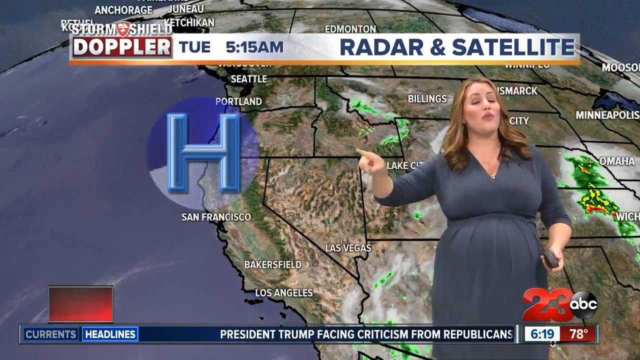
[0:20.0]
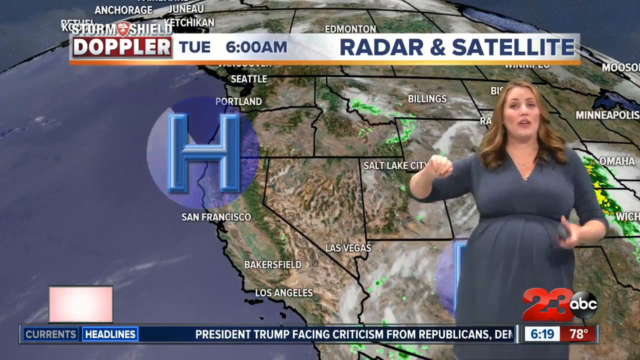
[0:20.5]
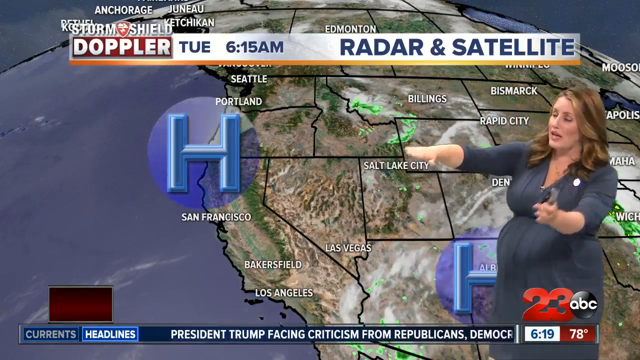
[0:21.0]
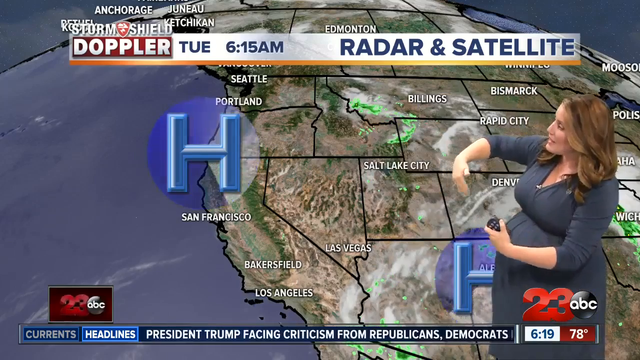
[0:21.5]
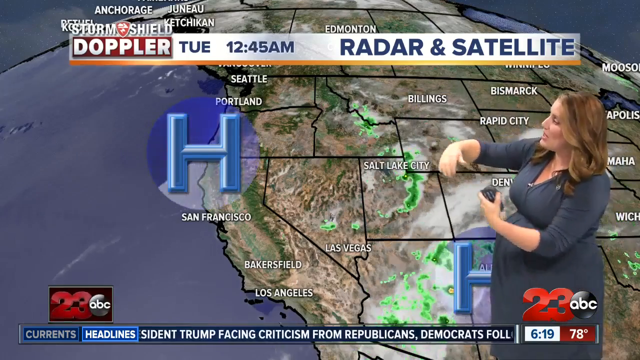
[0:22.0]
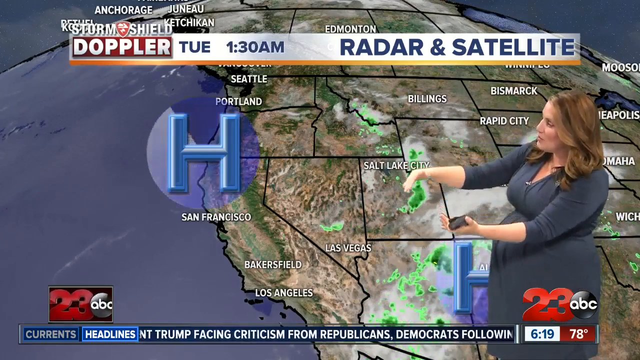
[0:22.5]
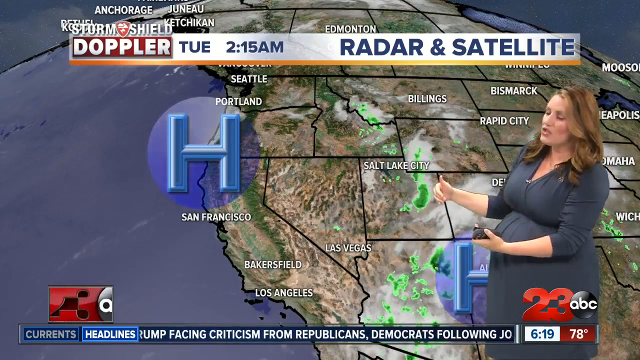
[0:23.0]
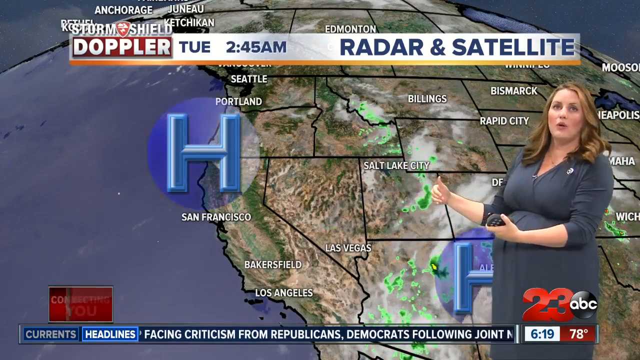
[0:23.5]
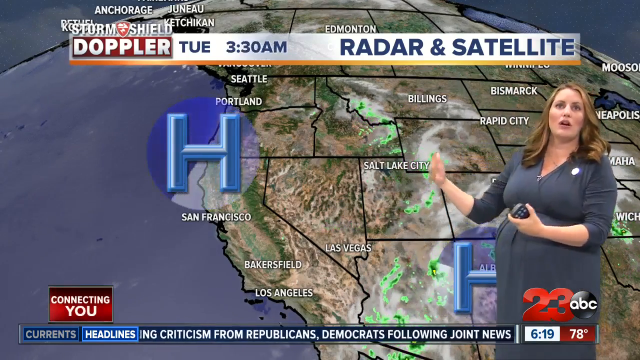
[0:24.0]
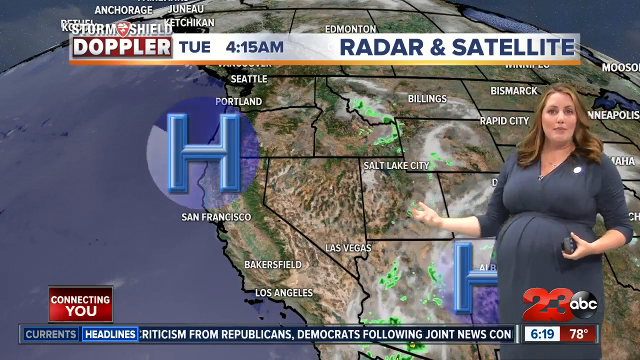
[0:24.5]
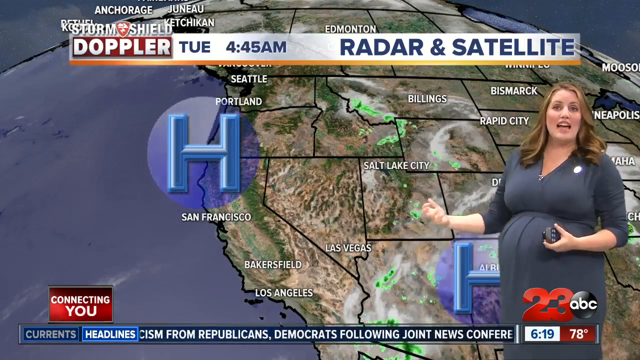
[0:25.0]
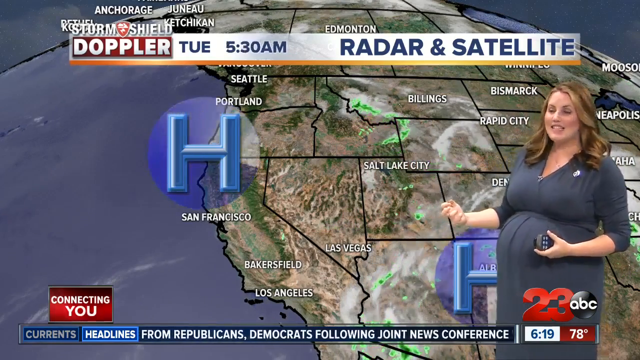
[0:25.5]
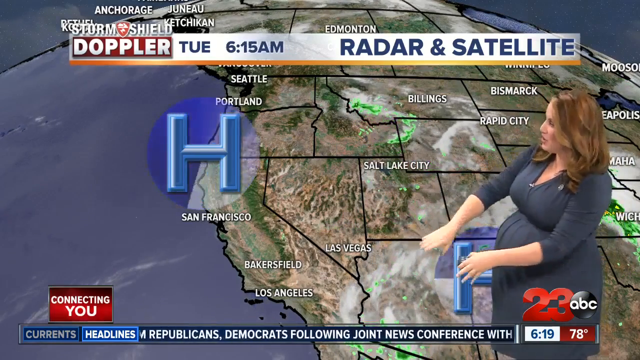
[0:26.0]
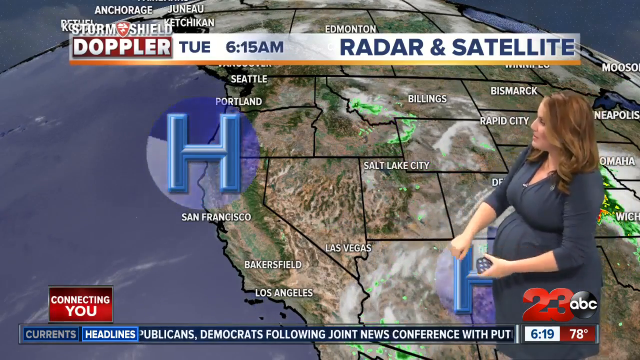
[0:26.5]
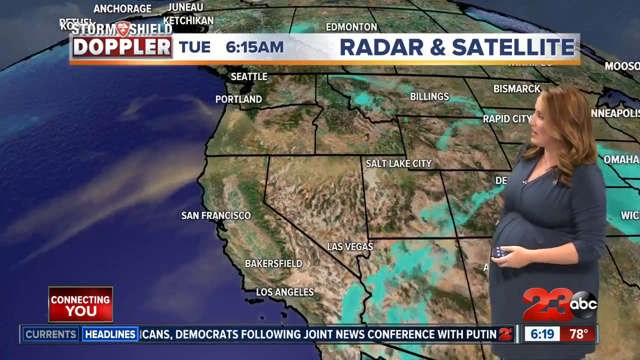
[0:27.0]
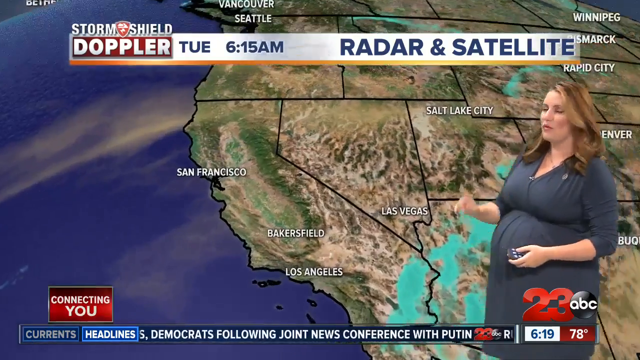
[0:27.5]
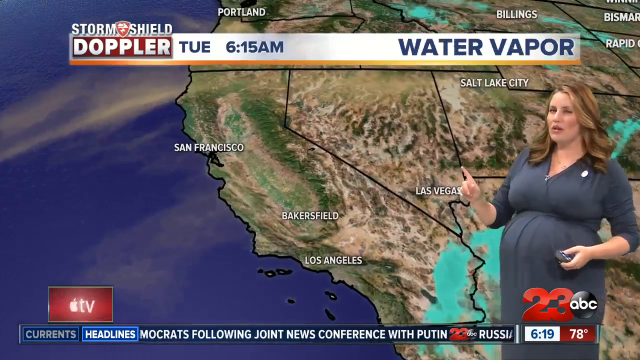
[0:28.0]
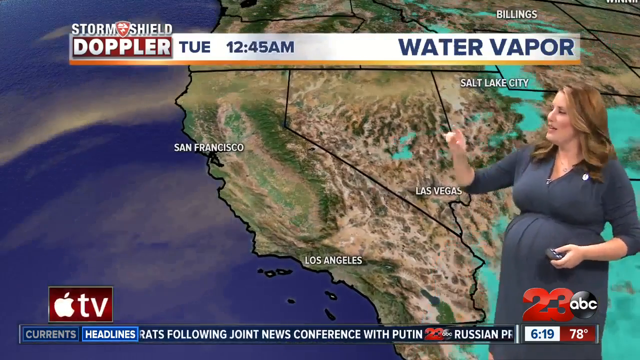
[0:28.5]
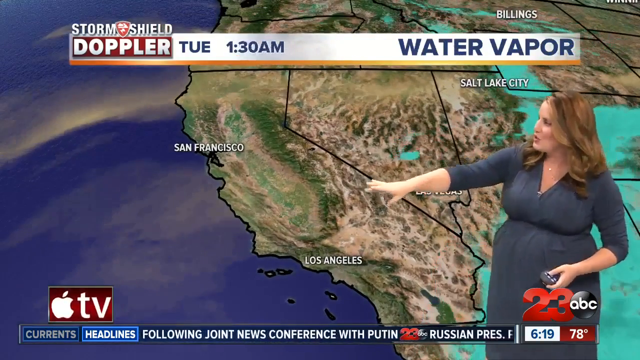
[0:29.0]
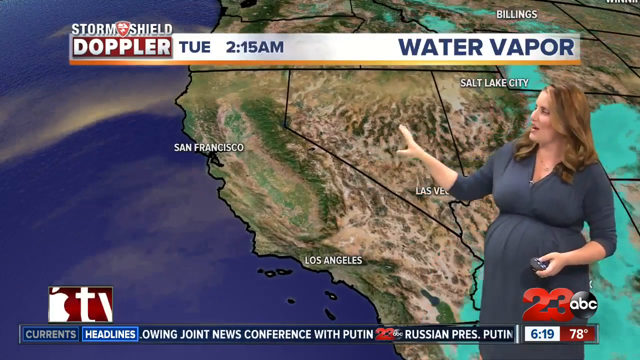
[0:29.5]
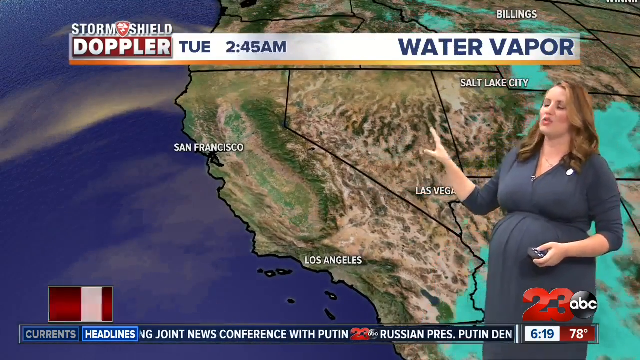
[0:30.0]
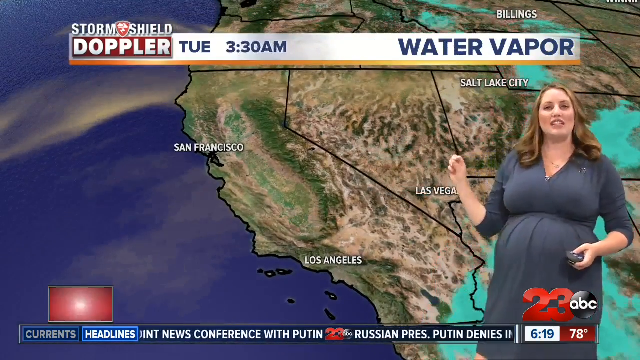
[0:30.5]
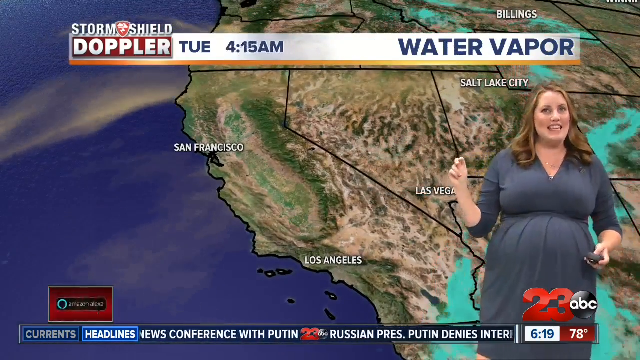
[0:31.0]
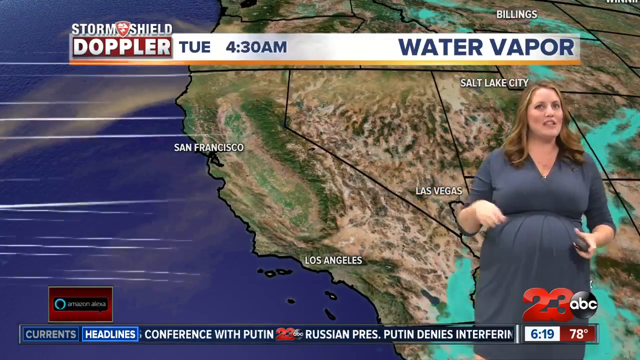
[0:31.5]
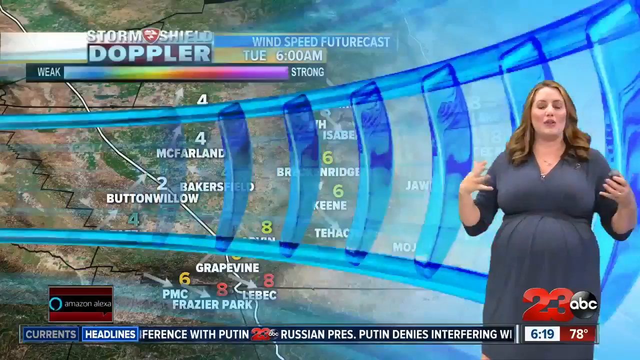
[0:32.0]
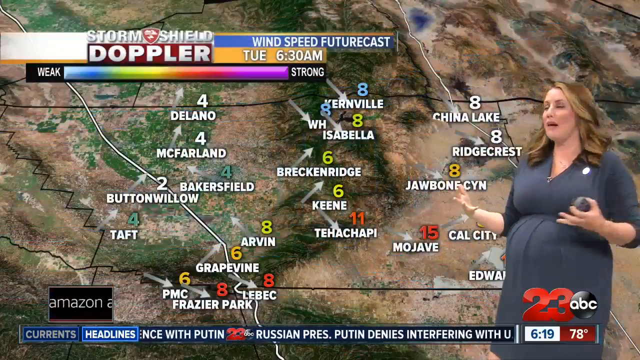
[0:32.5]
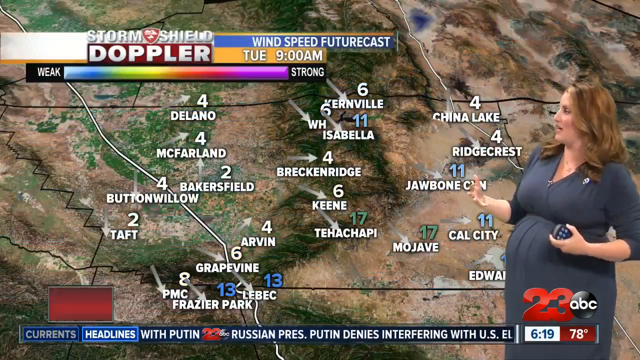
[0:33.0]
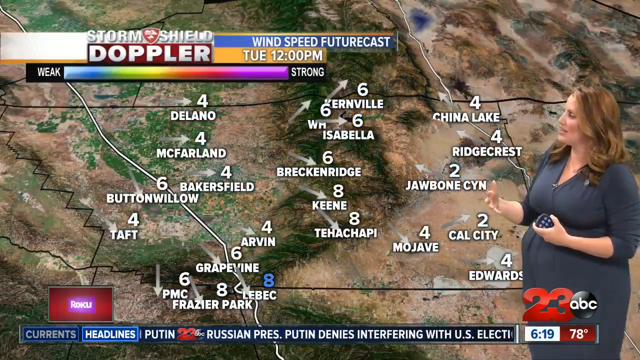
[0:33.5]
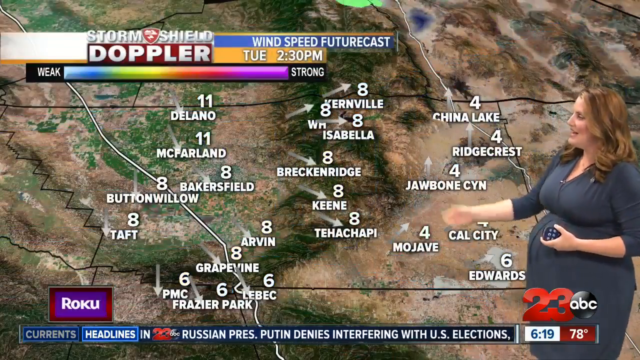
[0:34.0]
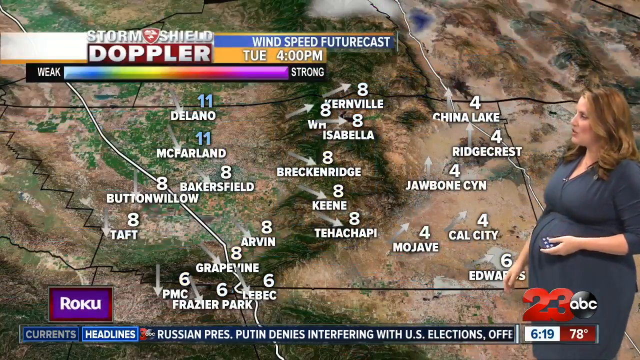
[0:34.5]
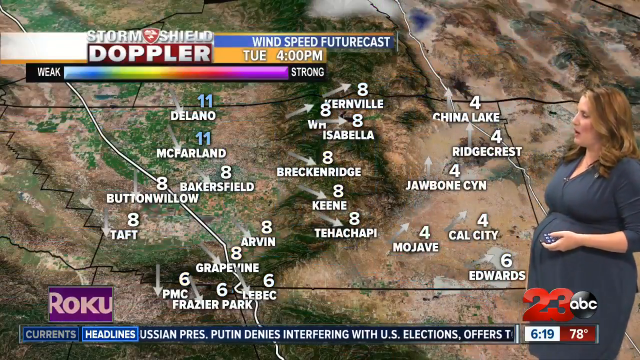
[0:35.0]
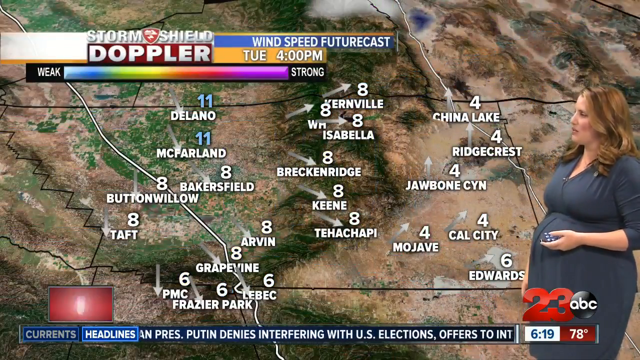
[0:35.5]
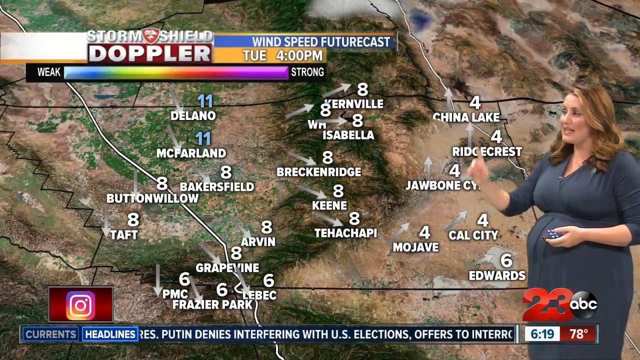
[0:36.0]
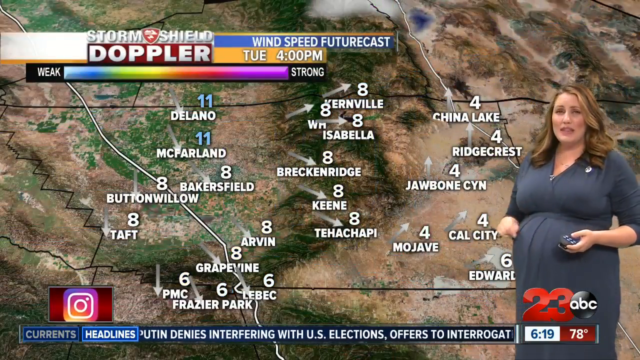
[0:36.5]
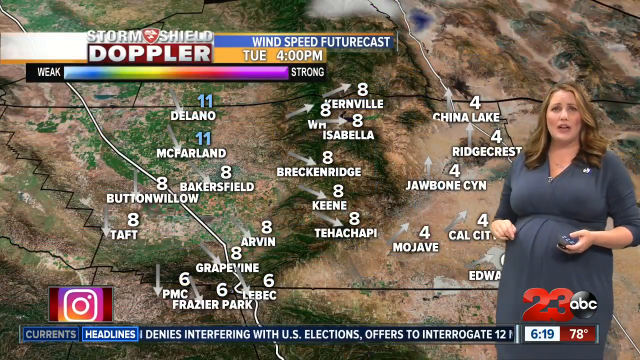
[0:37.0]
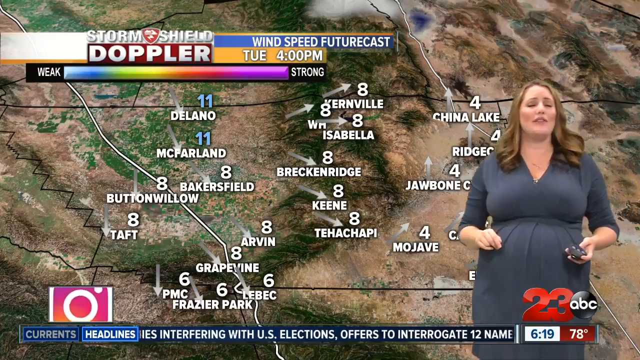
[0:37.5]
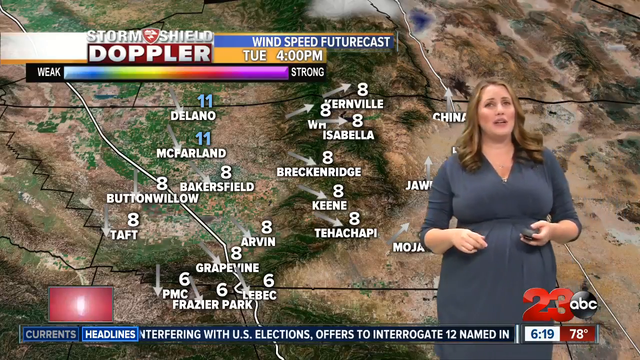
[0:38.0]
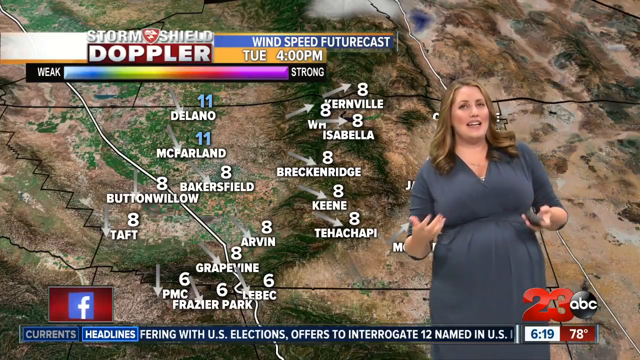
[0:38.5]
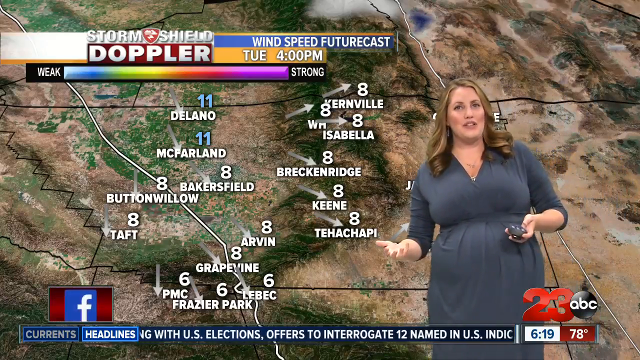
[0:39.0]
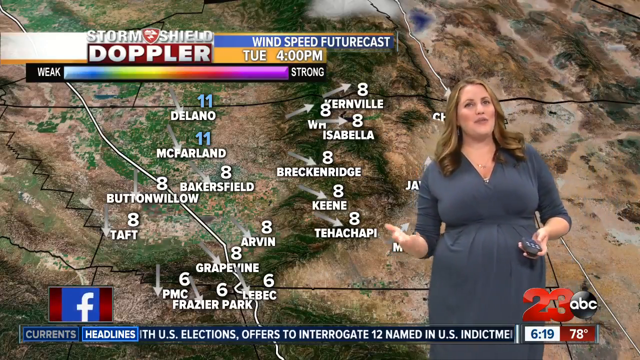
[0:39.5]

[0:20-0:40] A "Storm Shield Doppler" radar and satellite map reads "Tuesday 5:15 a.m." The weather reporter for 23 ABC wears a blue dress and seems somewhat heavy. A current headline begins "President Trump facing criticism". The woman then shows a wind speed futurecast with a weak-to-strong intensity scale, showing different towns and their wind speeds along with a projection of where the wind will head and how it spins and progresses.